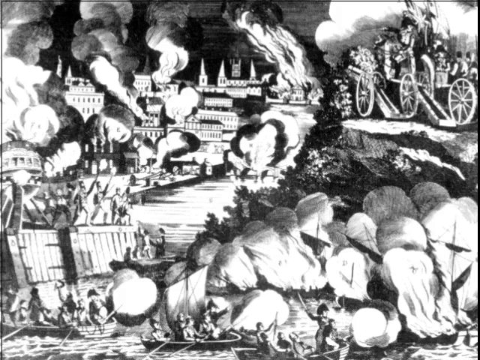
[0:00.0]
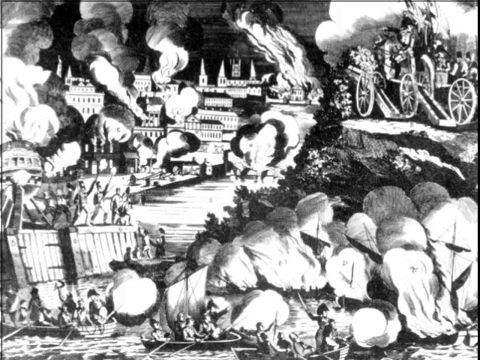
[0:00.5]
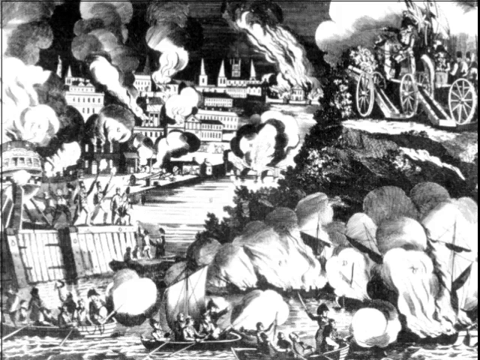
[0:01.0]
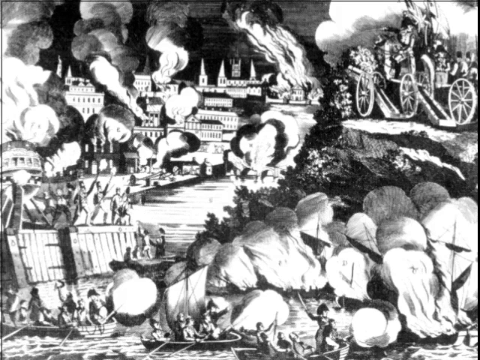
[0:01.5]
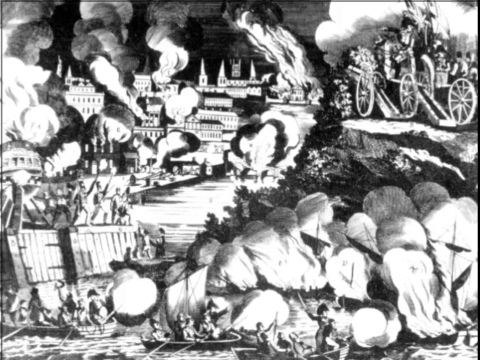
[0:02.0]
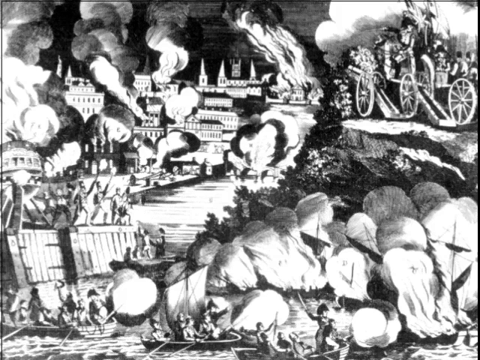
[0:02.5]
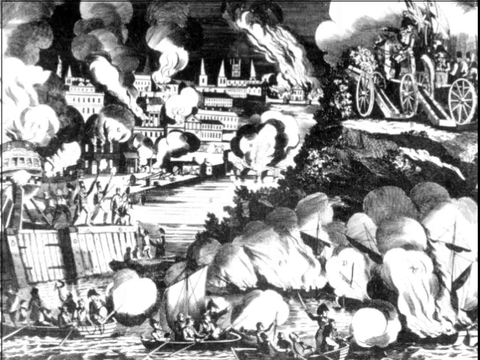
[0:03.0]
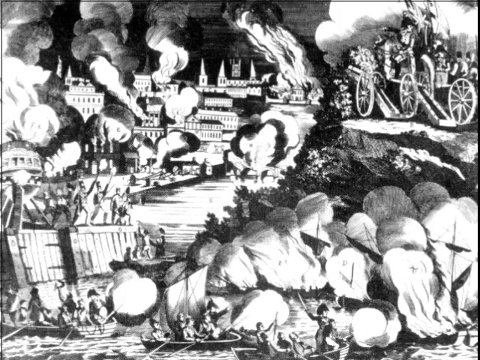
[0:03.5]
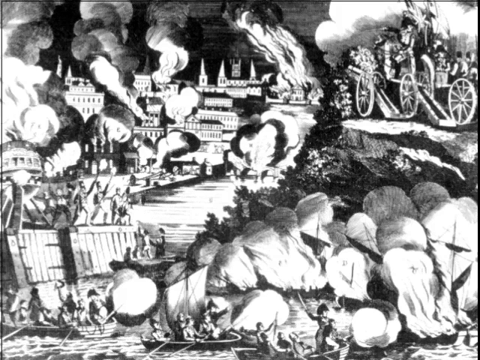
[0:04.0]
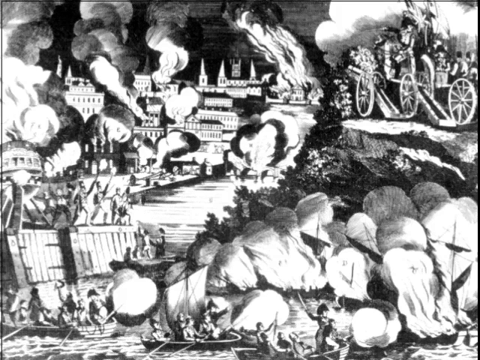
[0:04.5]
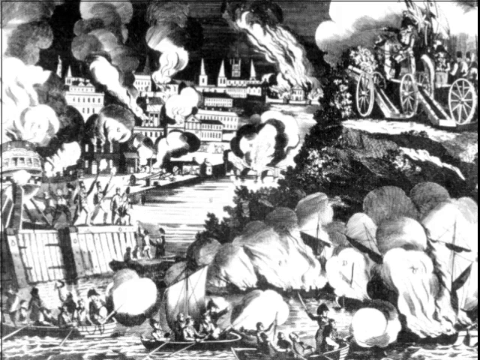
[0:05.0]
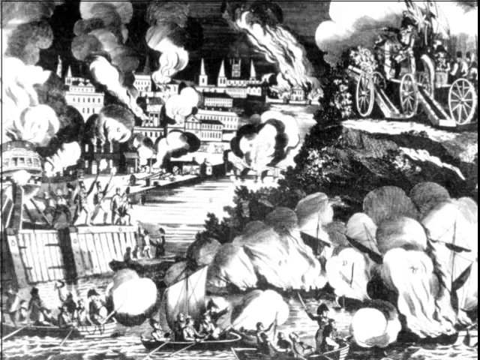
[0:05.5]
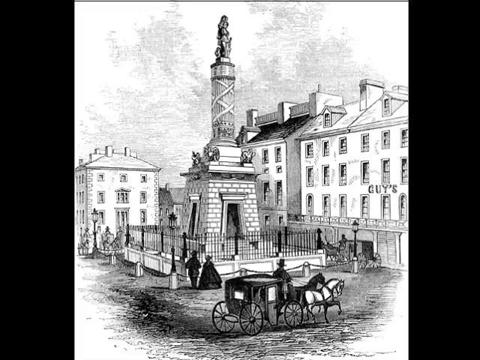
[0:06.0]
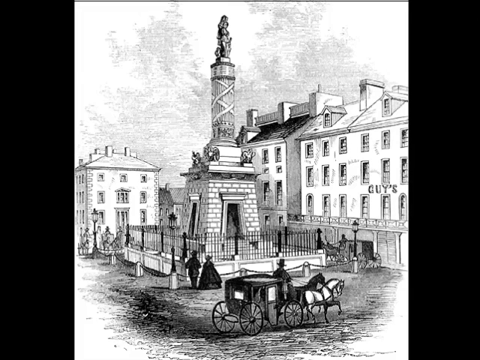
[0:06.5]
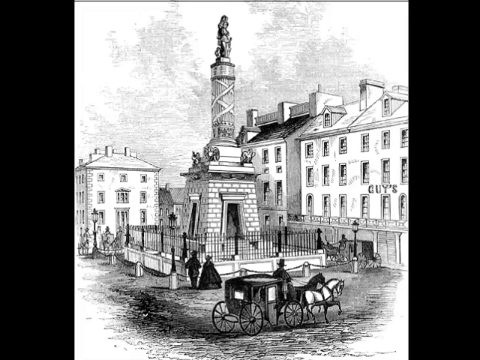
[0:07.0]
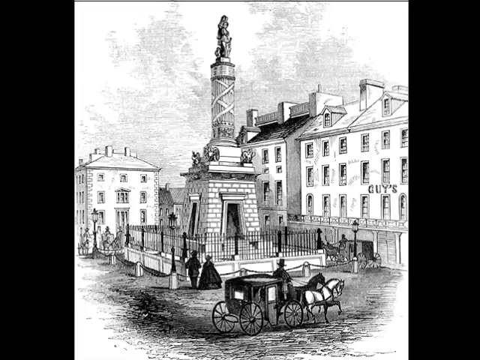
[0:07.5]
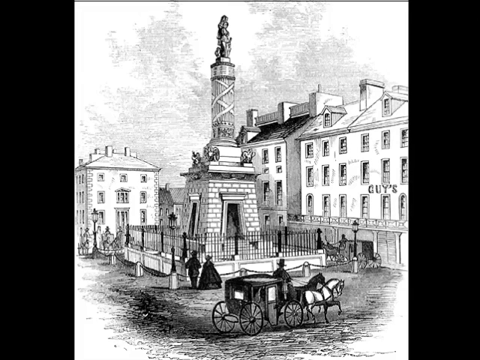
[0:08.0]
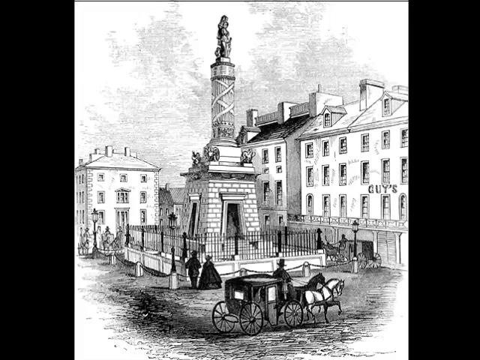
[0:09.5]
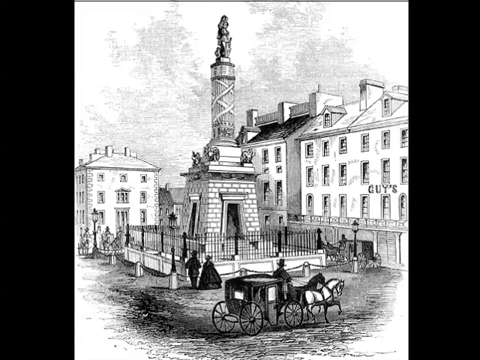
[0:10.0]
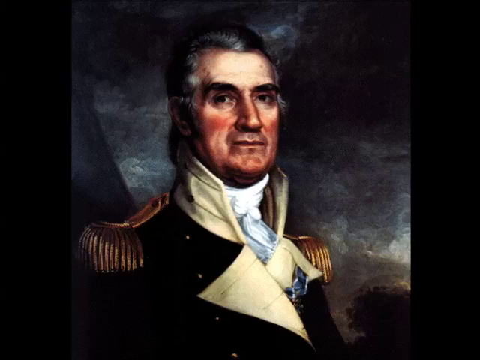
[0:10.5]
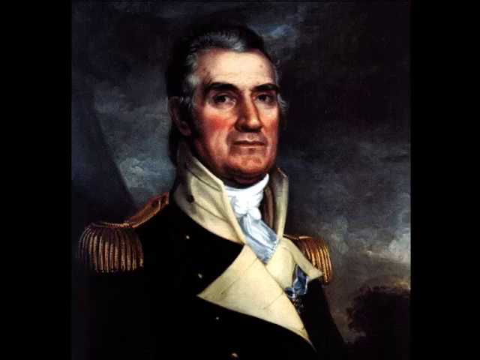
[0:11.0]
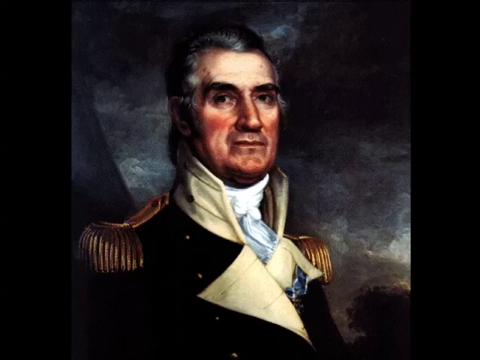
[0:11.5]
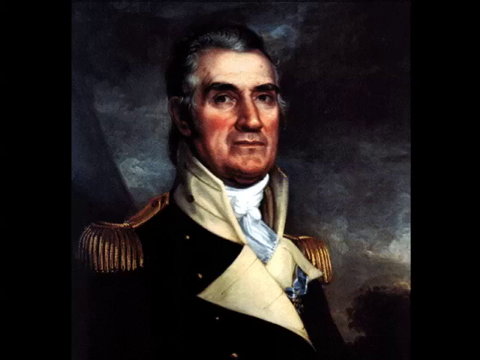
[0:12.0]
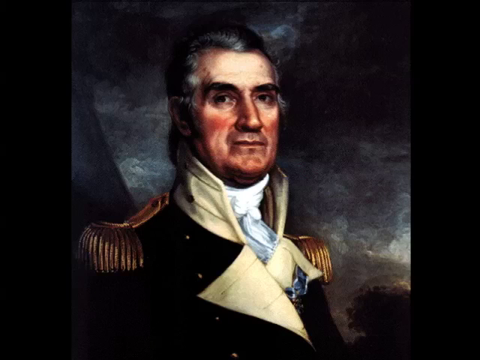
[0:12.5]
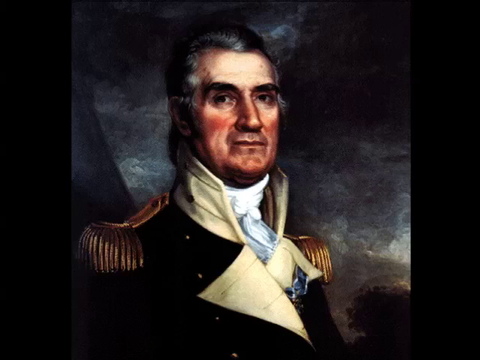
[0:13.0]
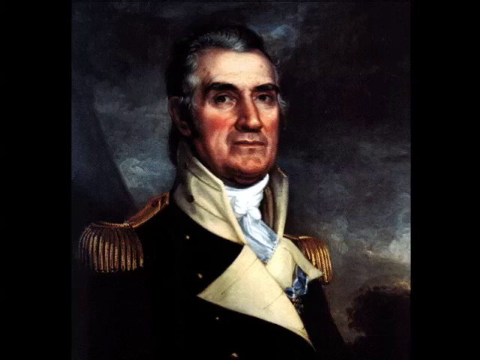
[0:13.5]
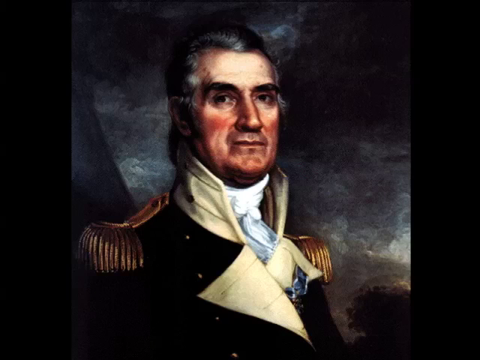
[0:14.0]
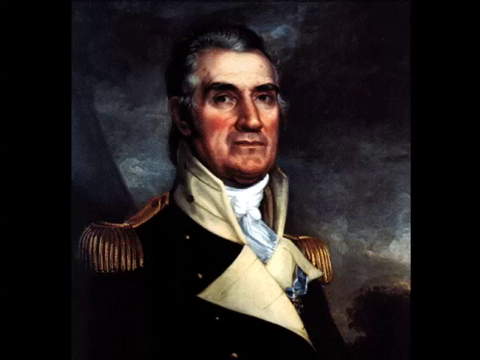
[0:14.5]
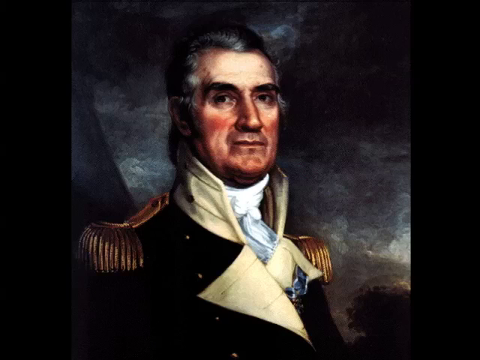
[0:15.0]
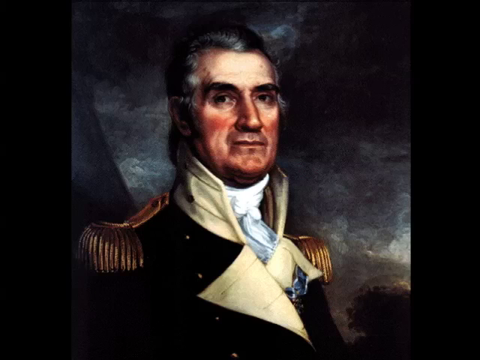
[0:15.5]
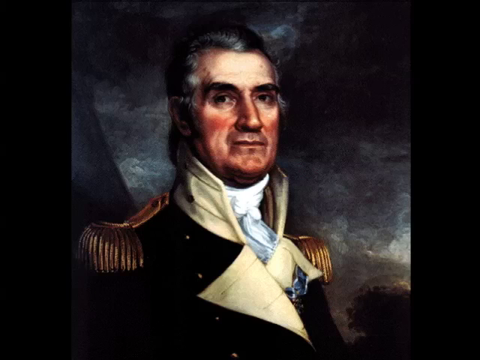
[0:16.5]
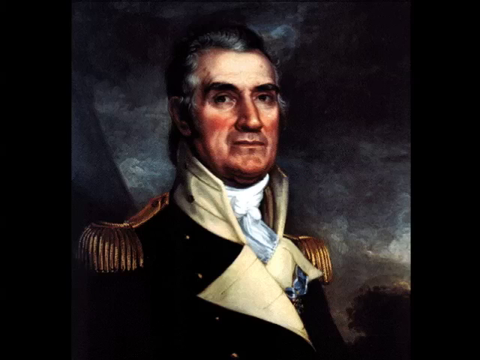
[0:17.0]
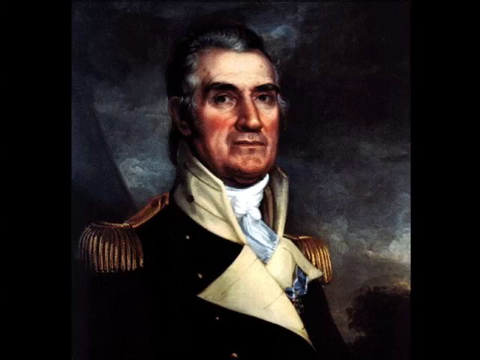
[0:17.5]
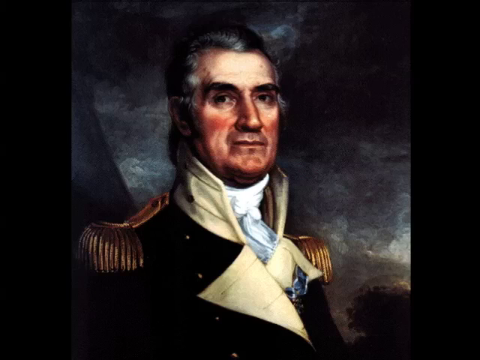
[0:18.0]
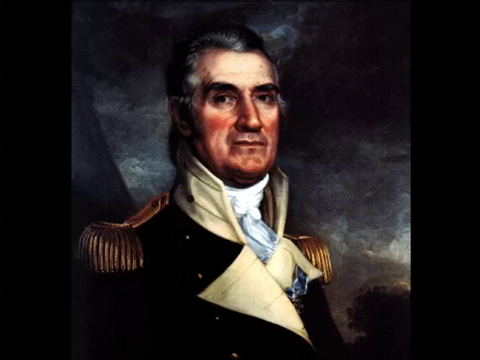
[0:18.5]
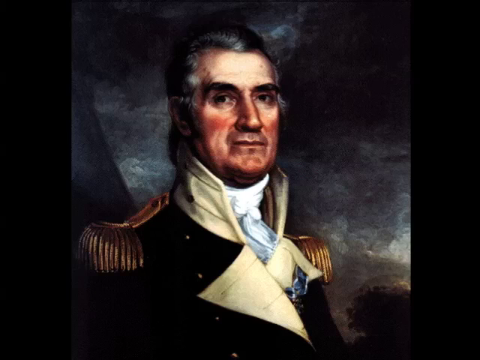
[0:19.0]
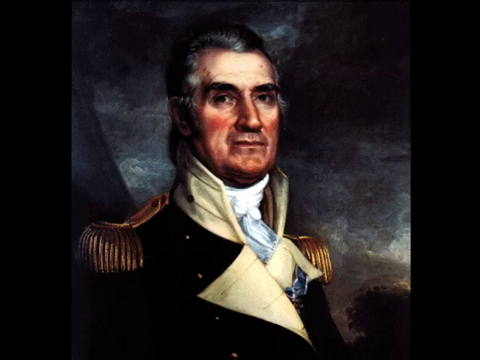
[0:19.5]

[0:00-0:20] A drawing depicts a war scene. Soldiers with swords raised into the air stand on what appears to be a bunker made of wood. The depiction is old. Two cannons on wheels are on top of a hill, with plumes of smoke, and in the distance below, across a waterway, a city is on fire. There is also a dock on the waterway. The drawing is a very well detailed pencil drawing in black and white and shades. The video transitions to another pencil drawing, of a city square. A statue of a chariot pulled by two horses, with a driver sitting in the driver's seat, is protected by a steel fence and has a concrete base. People are looking up at the statue. On one of the buildings is the word "guise". The video then transitions to a painted portrait of a military man in full military gear with shoulder pads and a high collar. He is European and wears a white scarf or ascot around his neck. The surroundings behind him are smoky light, with a plume of gray smoke.